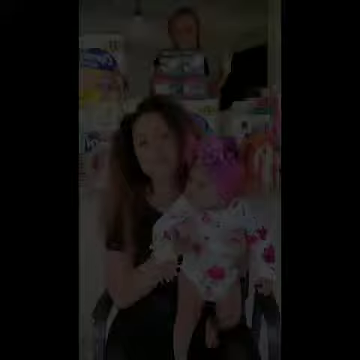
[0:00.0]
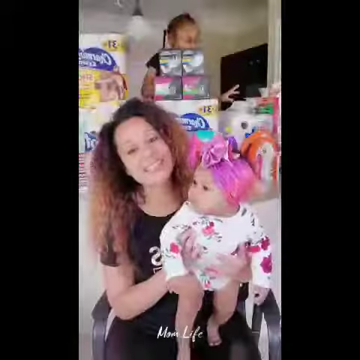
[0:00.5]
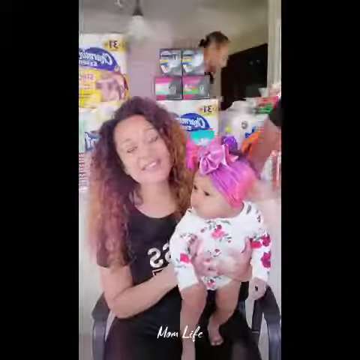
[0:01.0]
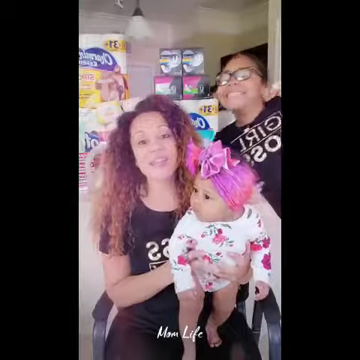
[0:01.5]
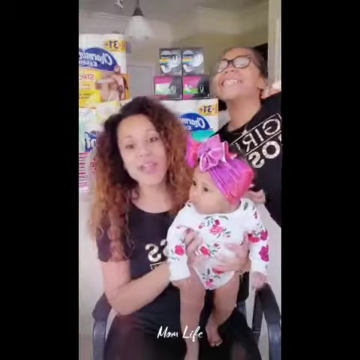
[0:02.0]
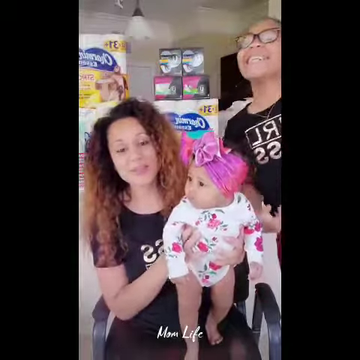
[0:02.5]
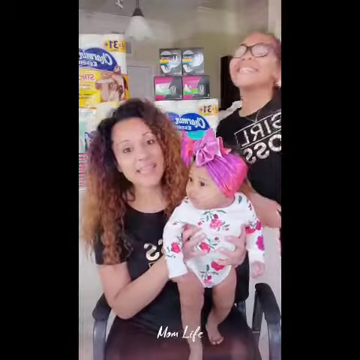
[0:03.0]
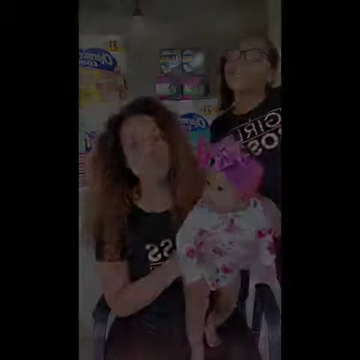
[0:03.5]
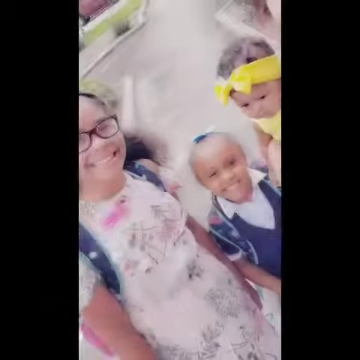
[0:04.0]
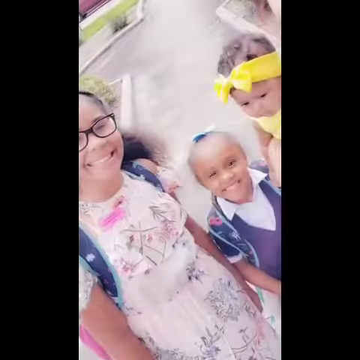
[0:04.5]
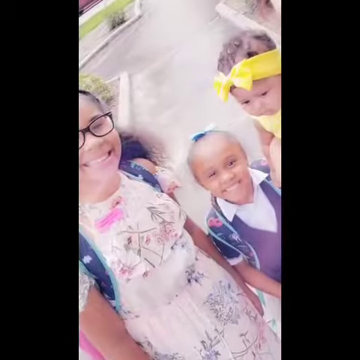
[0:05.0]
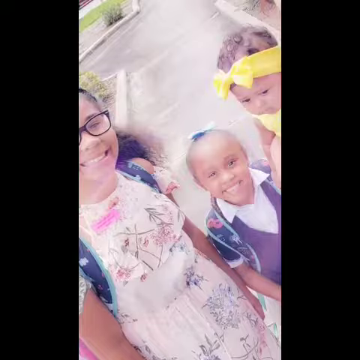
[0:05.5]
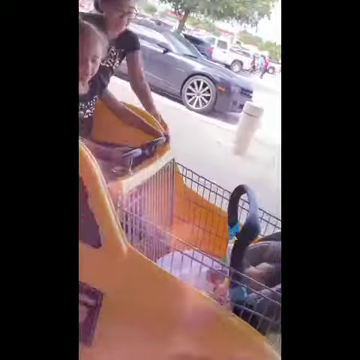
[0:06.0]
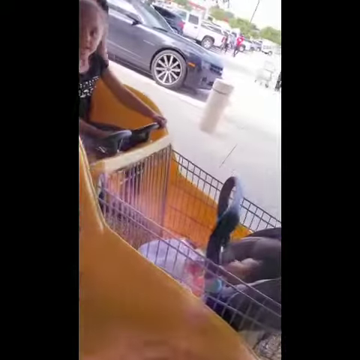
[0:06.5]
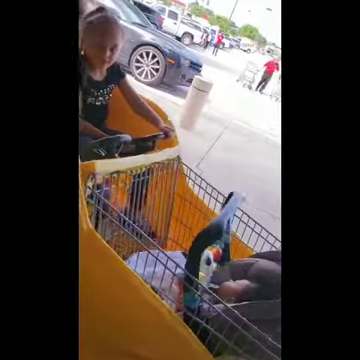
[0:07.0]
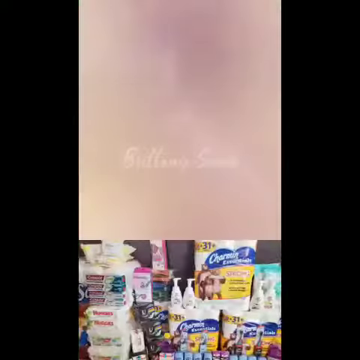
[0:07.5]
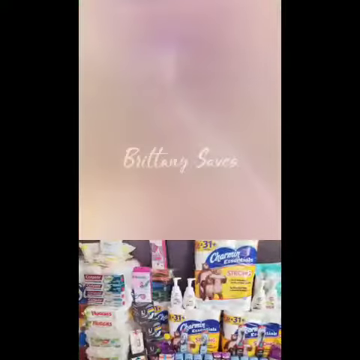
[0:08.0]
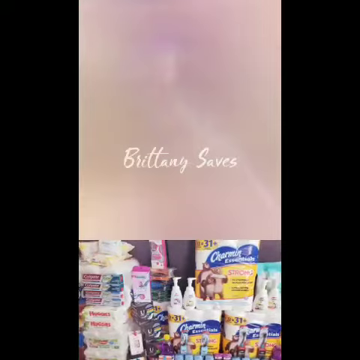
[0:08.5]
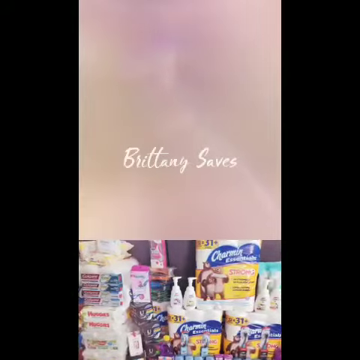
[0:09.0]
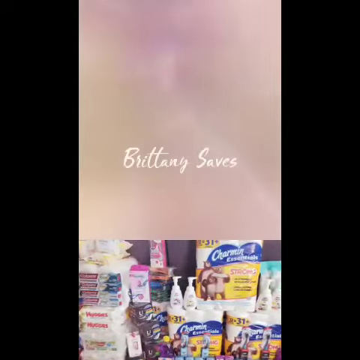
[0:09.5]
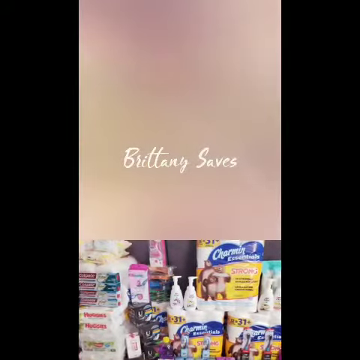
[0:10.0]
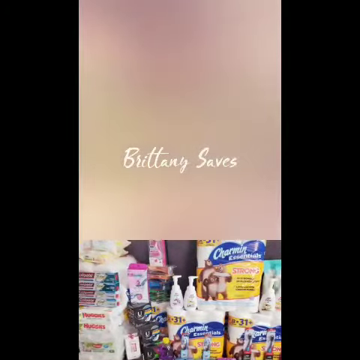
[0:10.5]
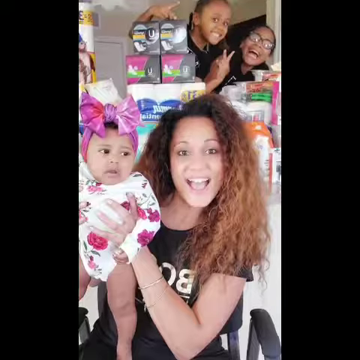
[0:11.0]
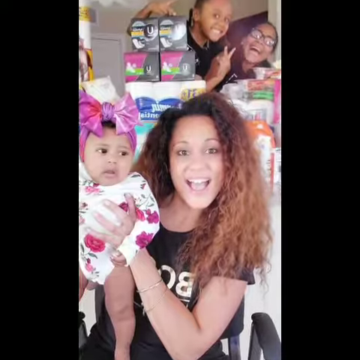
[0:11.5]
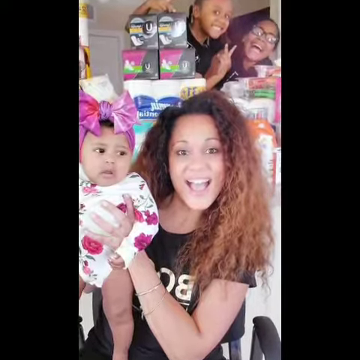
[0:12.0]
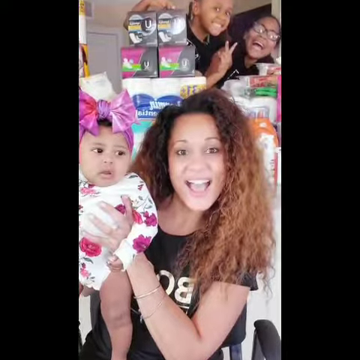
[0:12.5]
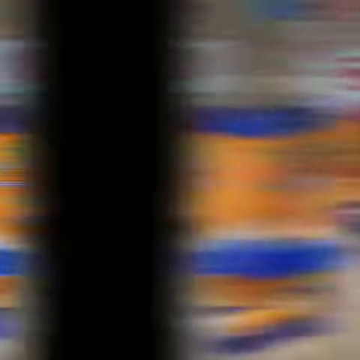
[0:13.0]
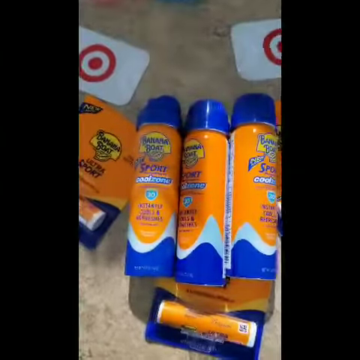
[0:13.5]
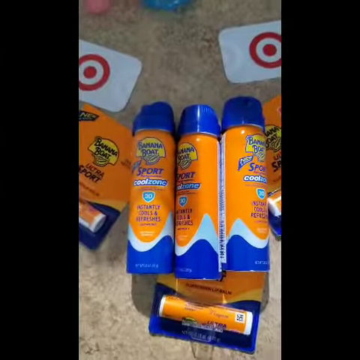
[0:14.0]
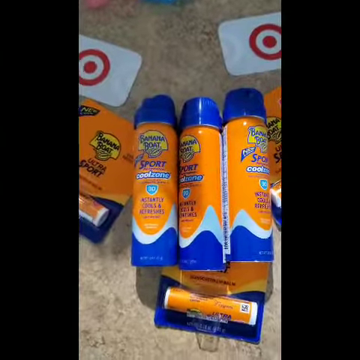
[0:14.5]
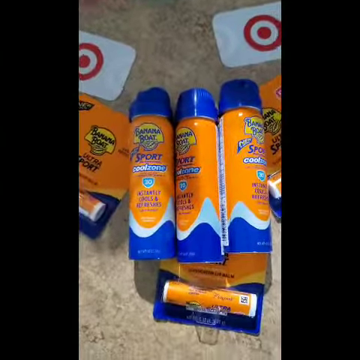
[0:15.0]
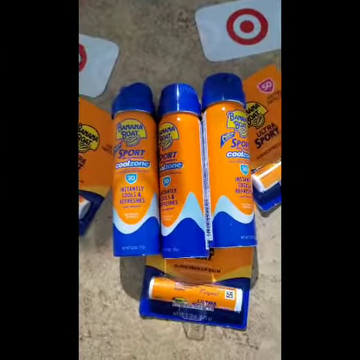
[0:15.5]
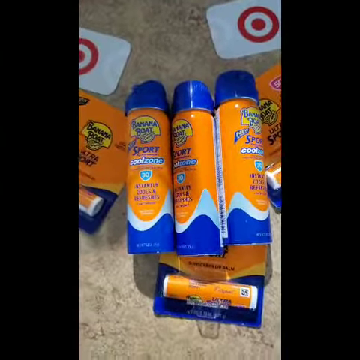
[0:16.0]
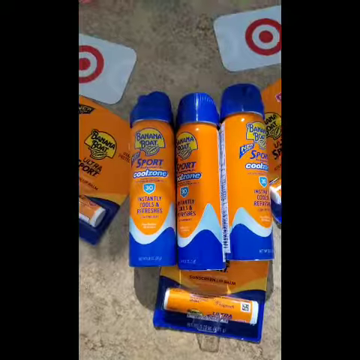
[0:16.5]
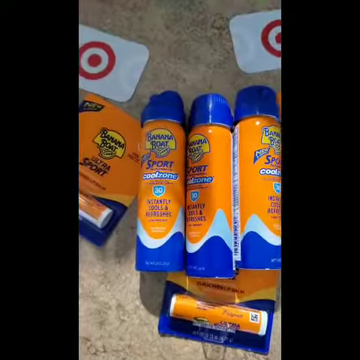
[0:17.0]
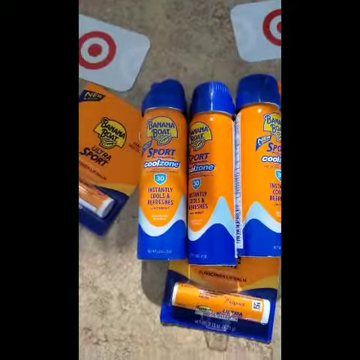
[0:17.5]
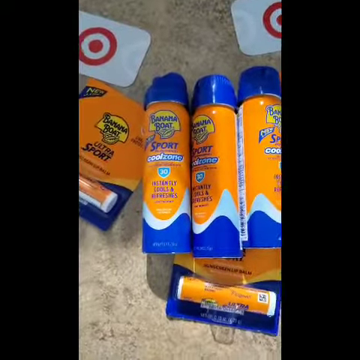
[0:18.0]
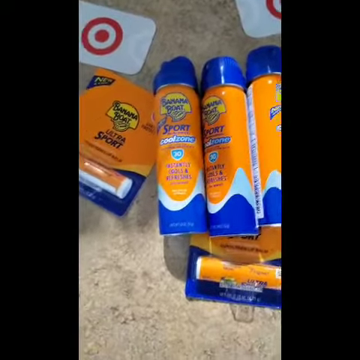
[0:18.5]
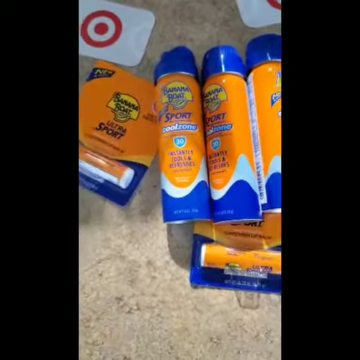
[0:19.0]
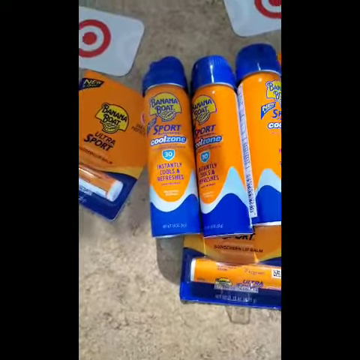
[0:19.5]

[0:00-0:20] The video starts with a family: three children and someone who appears to be their mother. Two of the children are a little older, and one is a baby. Behind them are some packages of toilet paper and what appears to be sanitary pads. The video cuts to pictures of the three children, and a logo comes up that says "Brittany Saves." A picture shows some toilet paper, other toiletries such as soaps or lotions, diaper wipes, and other products that are a bit difficult to see. It cuts back to the mother and the children, who all look very excited. It then cuts to a video of Banana Boat Sport sunscreen in spray form as well as stick form. Two Target gift cards are at the top of the screen, and sticks are on either side of the aerosol spray cans of sunscreen.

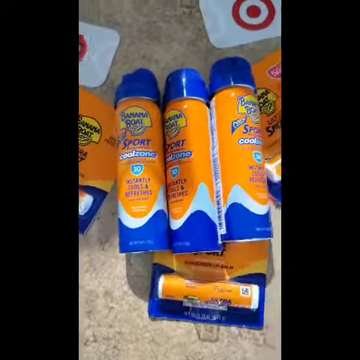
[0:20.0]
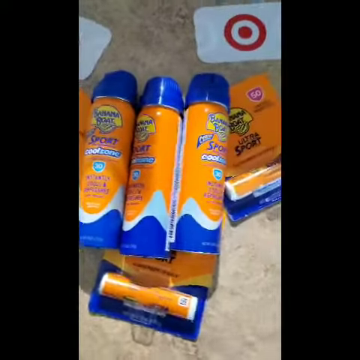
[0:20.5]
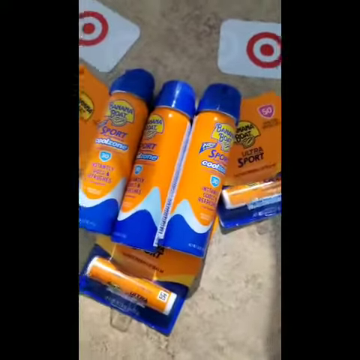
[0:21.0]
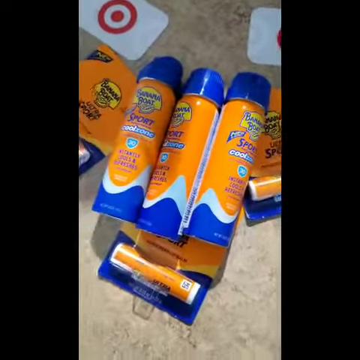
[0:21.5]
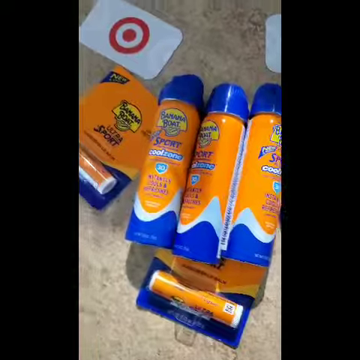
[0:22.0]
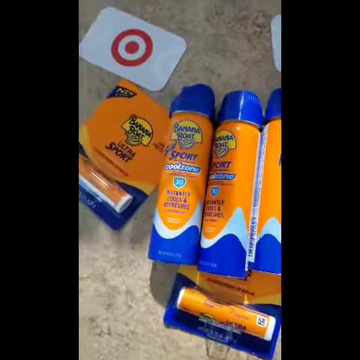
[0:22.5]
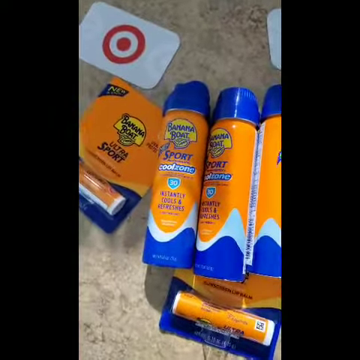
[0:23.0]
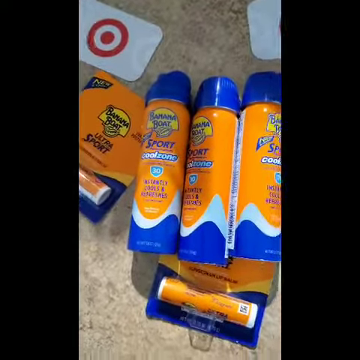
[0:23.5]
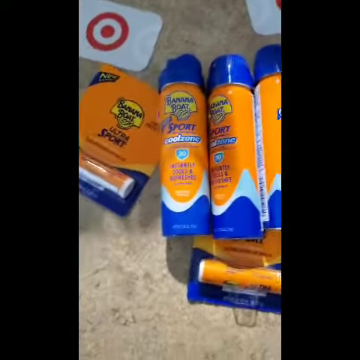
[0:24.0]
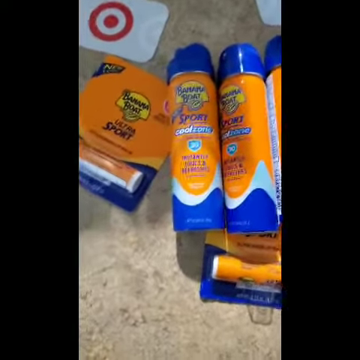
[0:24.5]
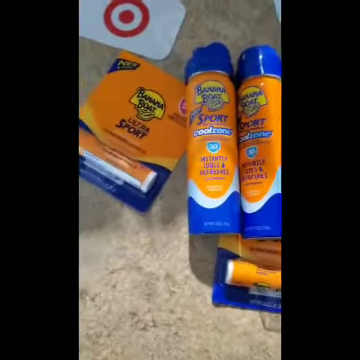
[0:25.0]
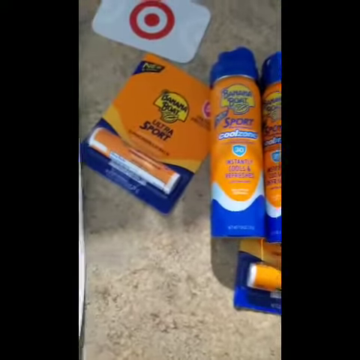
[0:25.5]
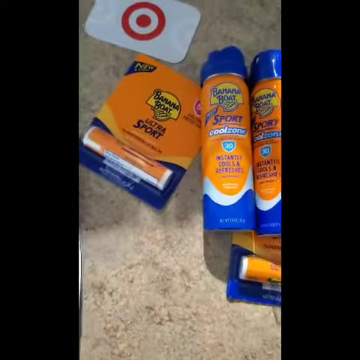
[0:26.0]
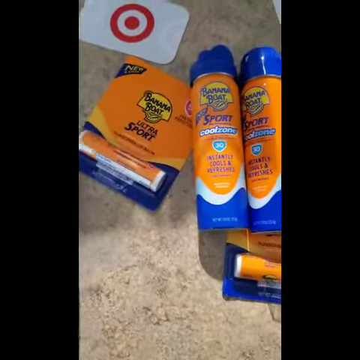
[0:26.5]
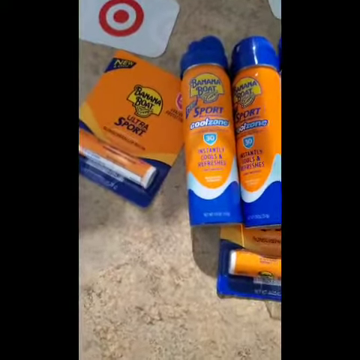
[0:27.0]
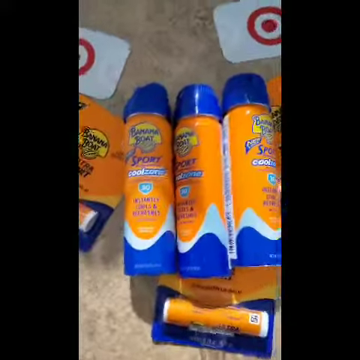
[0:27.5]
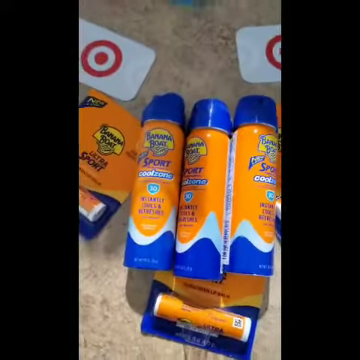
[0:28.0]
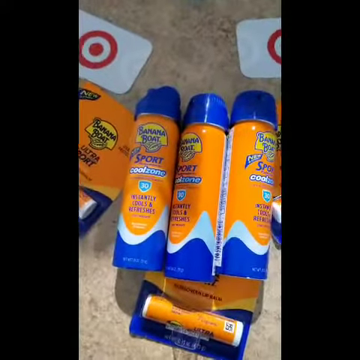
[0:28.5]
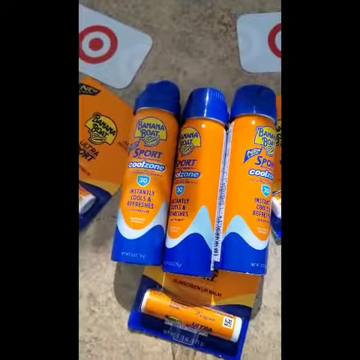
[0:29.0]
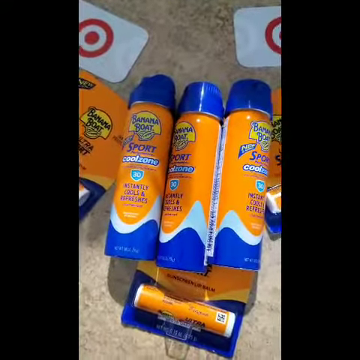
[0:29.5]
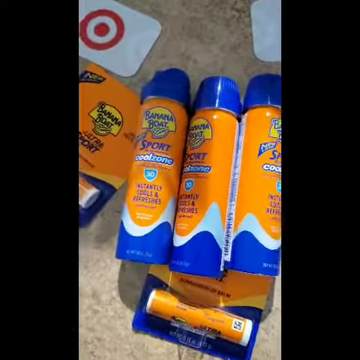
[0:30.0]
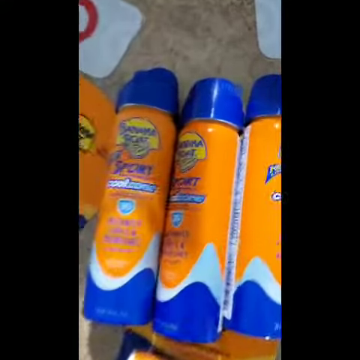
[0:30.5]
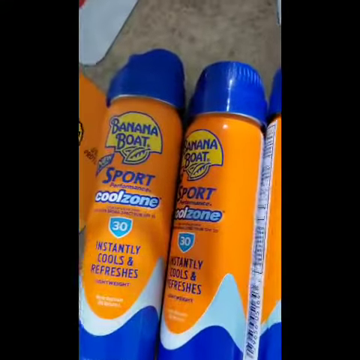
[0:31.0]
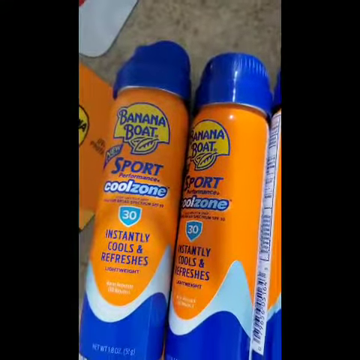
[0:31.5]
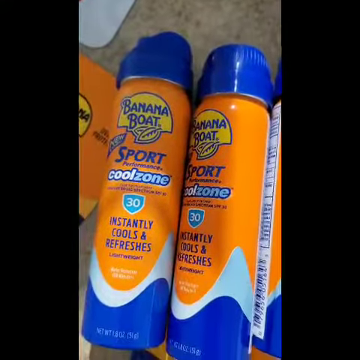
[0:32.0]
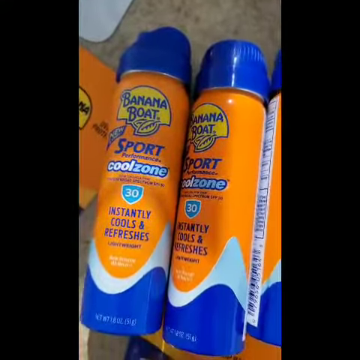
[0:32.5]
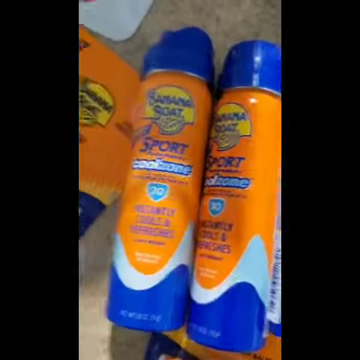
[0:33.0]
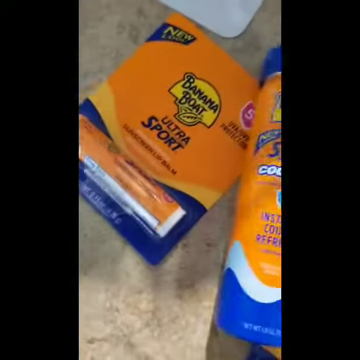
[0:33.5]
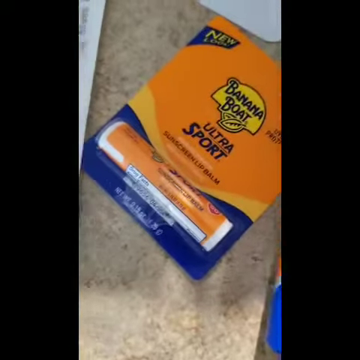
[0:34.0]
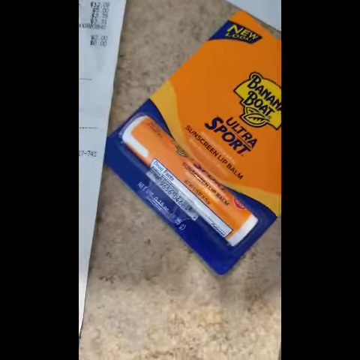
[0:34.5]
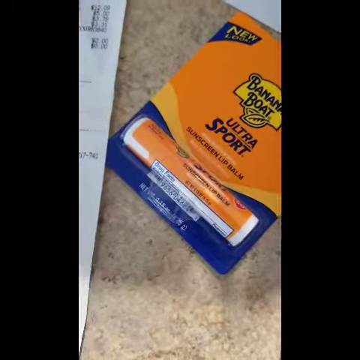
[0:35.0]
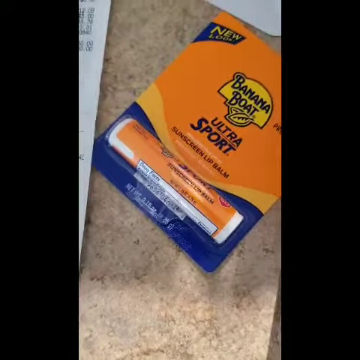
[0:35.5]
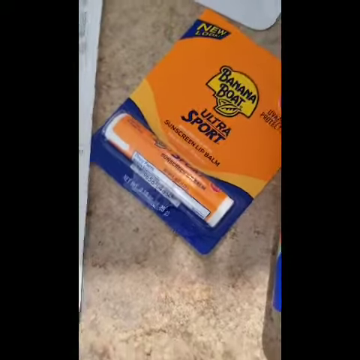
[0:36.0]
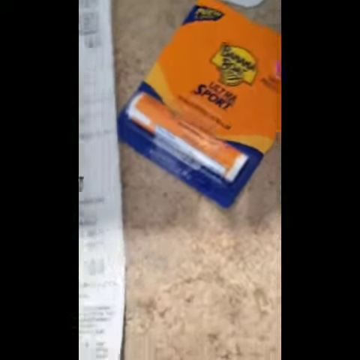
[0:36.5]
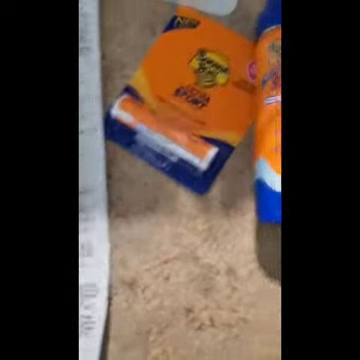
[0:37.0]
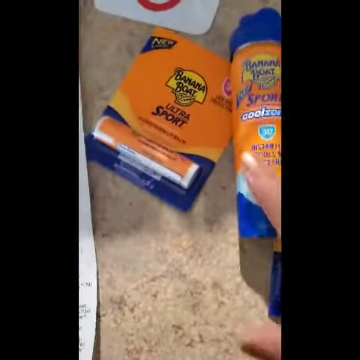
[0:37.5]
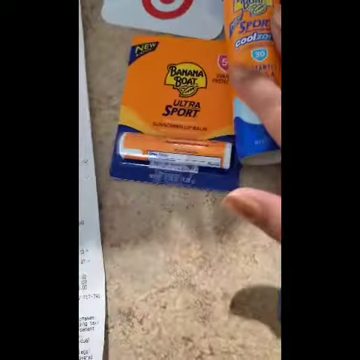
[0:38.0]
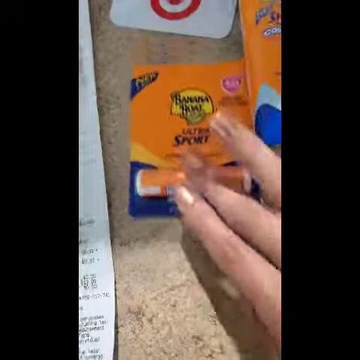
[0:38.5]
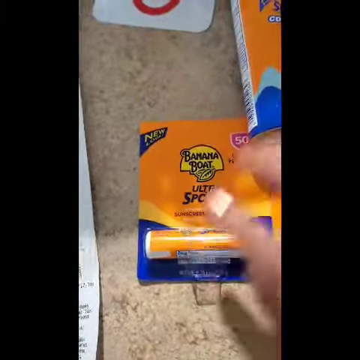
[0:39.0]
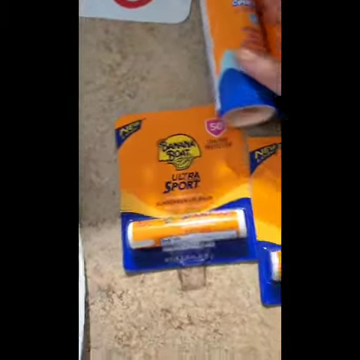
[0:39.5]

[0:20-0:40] The Banana Boat Sport sunscreen is still shown: three aerosol spray cans of sunscreen and three packages of a stick that appears to be a chapstick-type sunscreen. Above them, on both the right and left sides, are two cards that appear to be Target gift cards. The camera zooms in a bit on the sunscreens, showing that it is Banana Boat Sport Cool Zone and that it instantly cools and refreshes. The video then cuts to the sunscreen lip balm, confirming that the little stick packages are lip balm. To the left of the lip balm is a receipt of some sort from a store. The camera work is a little shaky; the video is very much a homemade advertisement, likely made by the mother seen earlier.